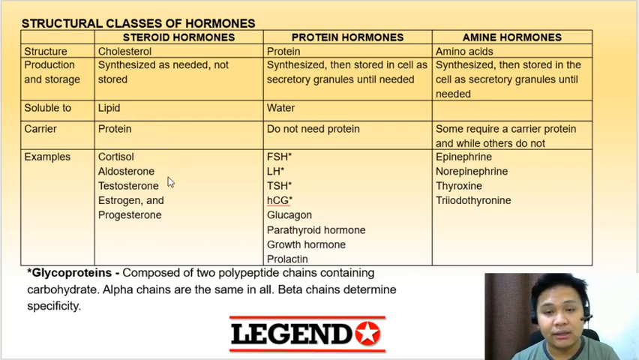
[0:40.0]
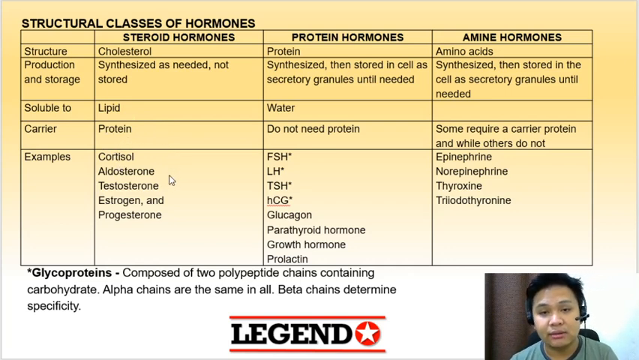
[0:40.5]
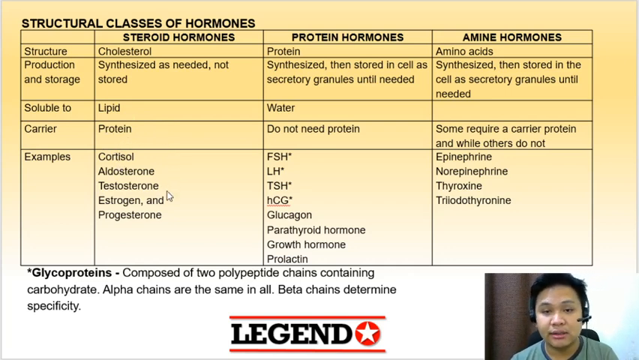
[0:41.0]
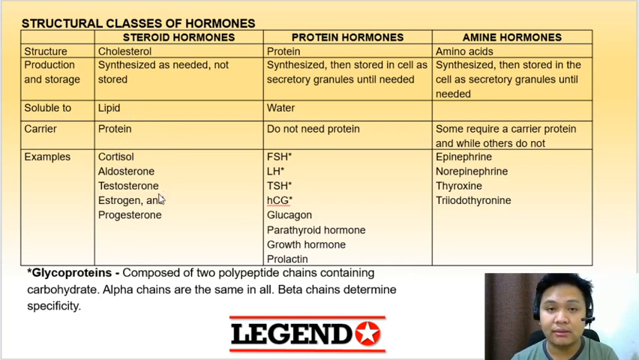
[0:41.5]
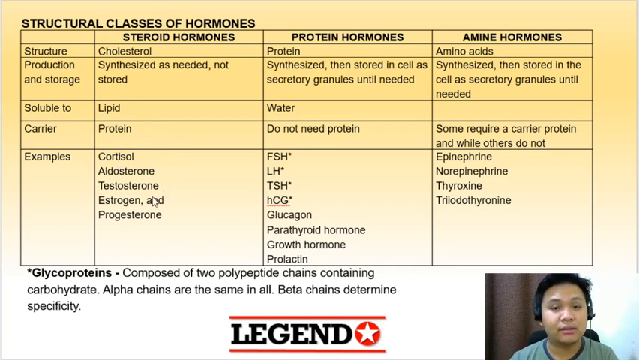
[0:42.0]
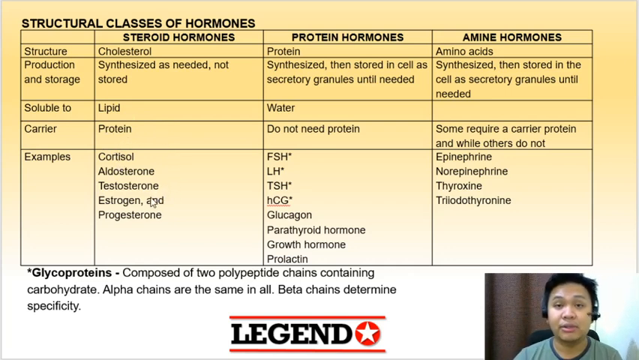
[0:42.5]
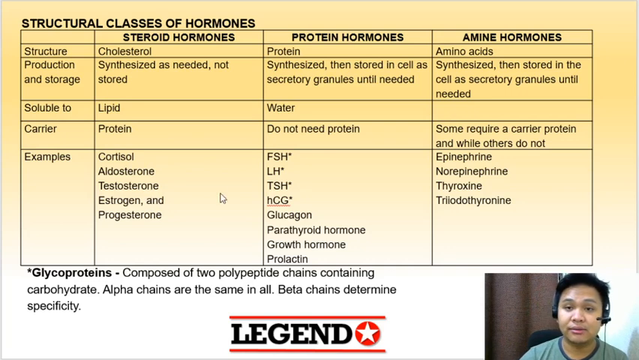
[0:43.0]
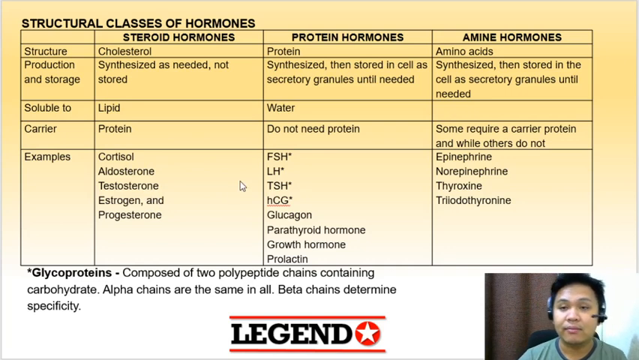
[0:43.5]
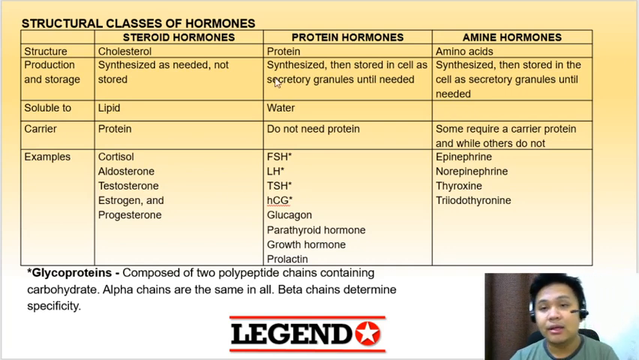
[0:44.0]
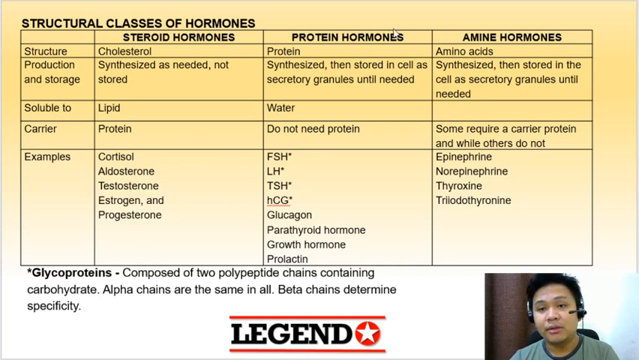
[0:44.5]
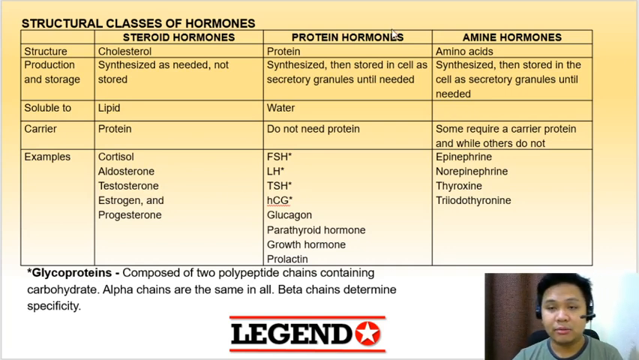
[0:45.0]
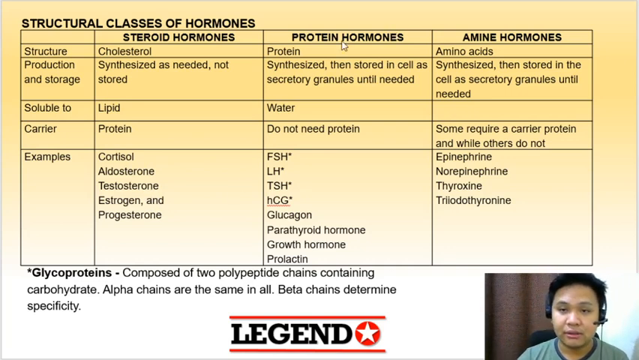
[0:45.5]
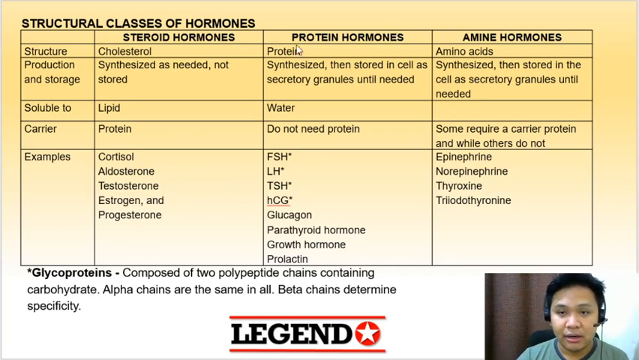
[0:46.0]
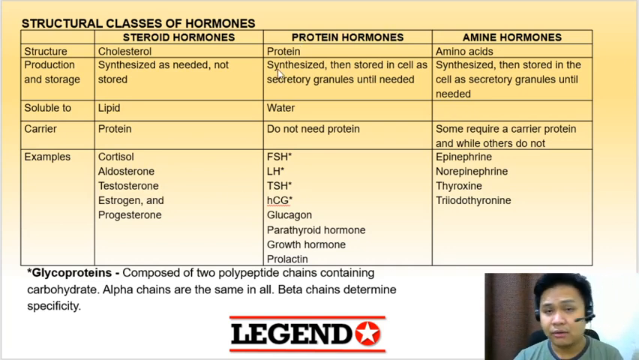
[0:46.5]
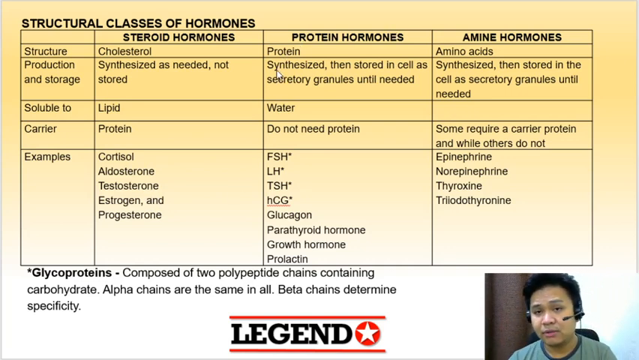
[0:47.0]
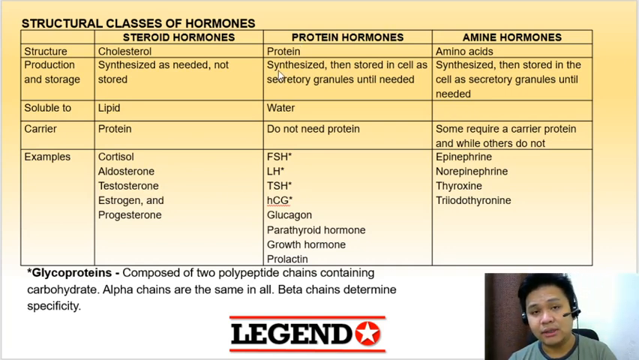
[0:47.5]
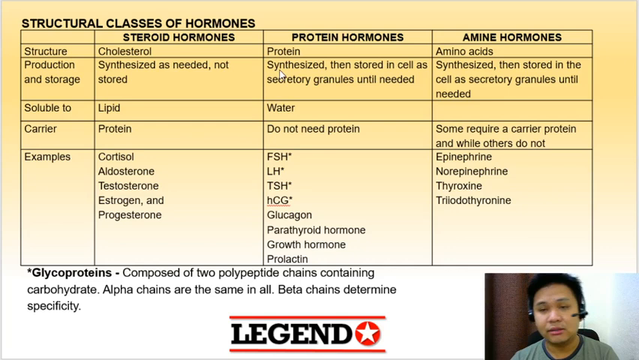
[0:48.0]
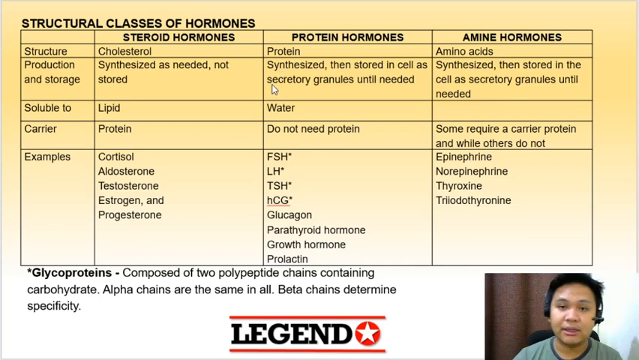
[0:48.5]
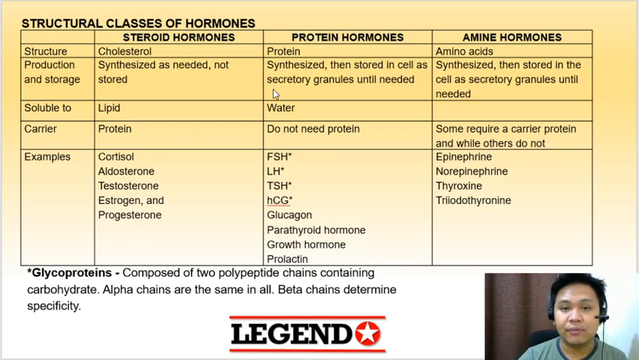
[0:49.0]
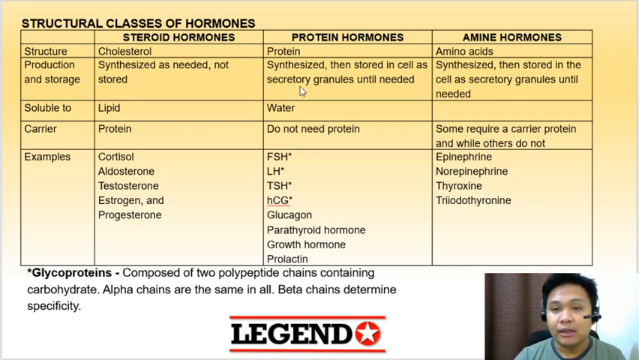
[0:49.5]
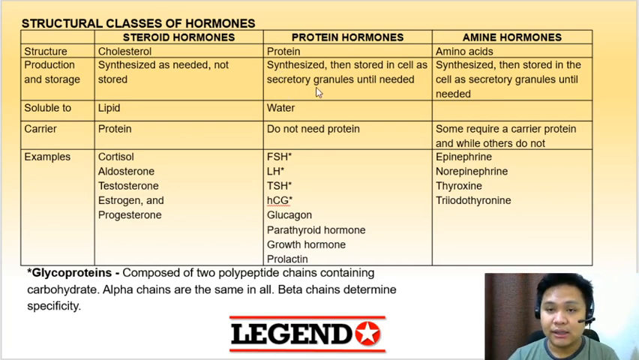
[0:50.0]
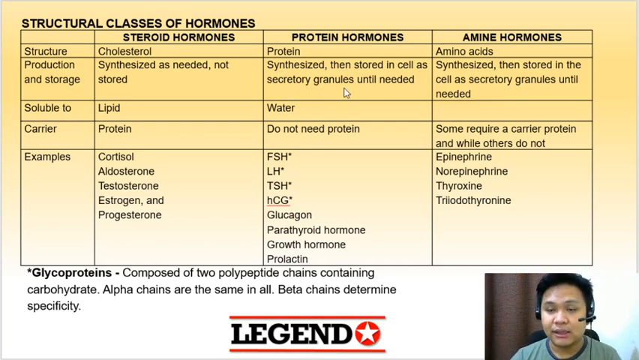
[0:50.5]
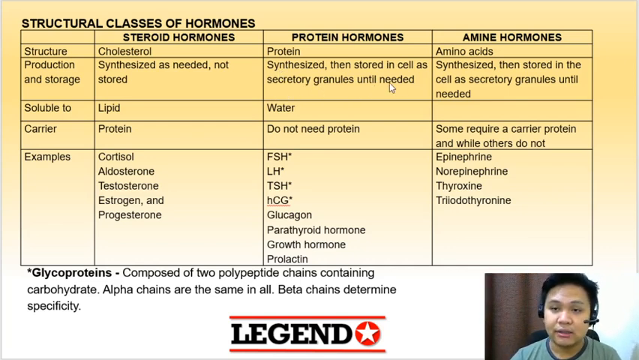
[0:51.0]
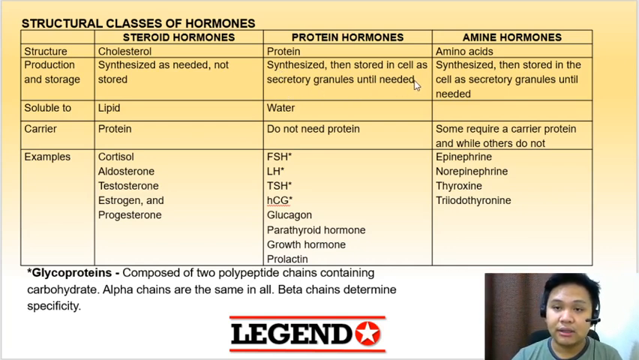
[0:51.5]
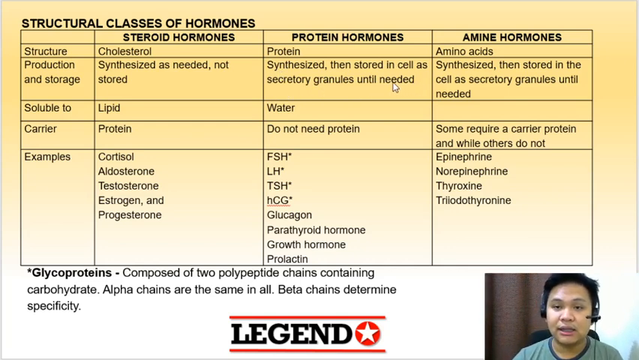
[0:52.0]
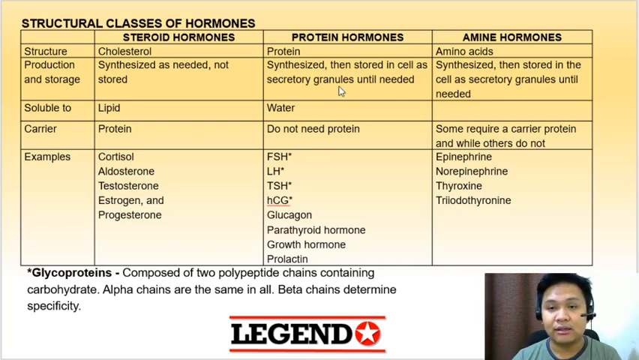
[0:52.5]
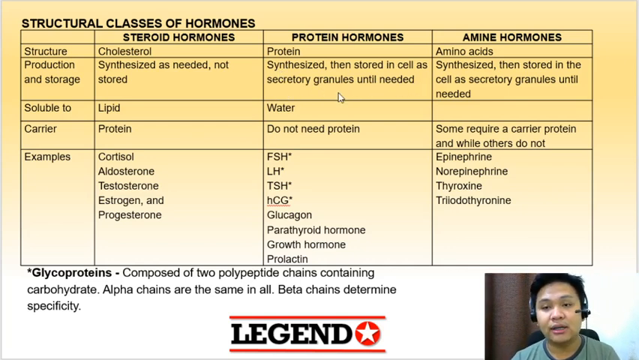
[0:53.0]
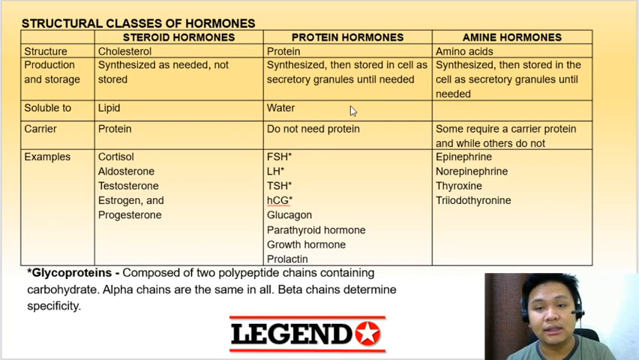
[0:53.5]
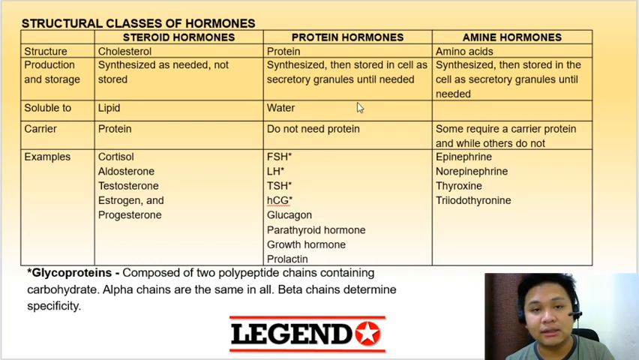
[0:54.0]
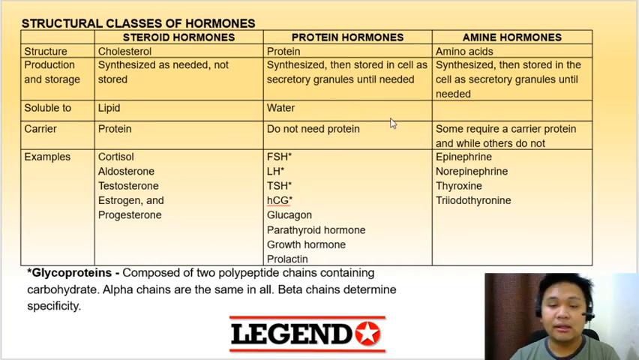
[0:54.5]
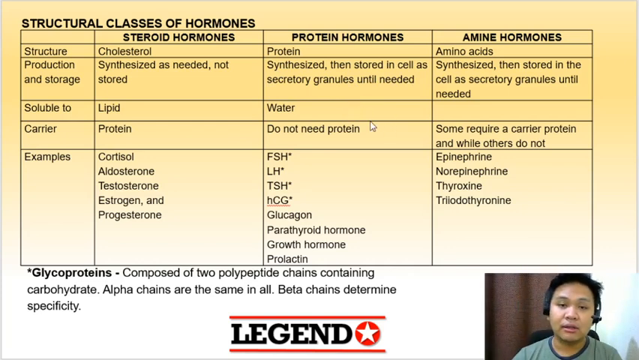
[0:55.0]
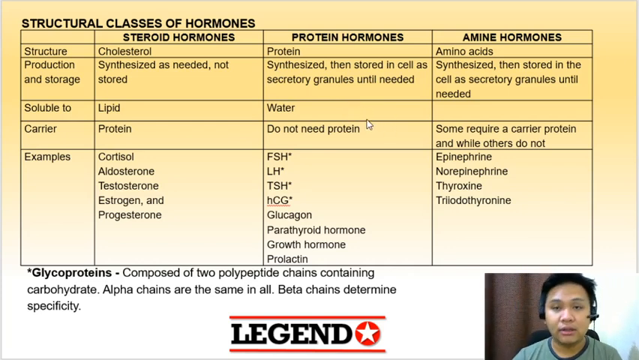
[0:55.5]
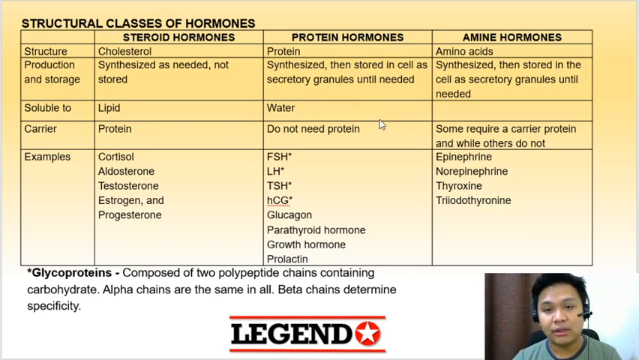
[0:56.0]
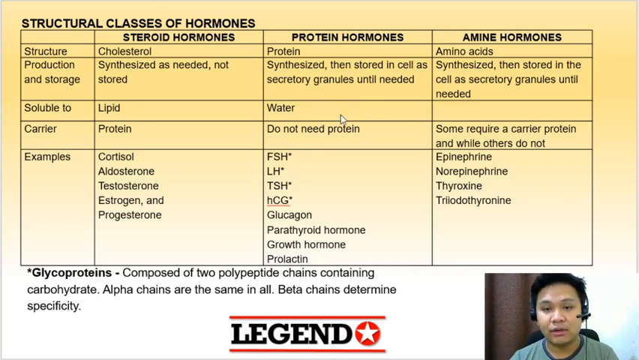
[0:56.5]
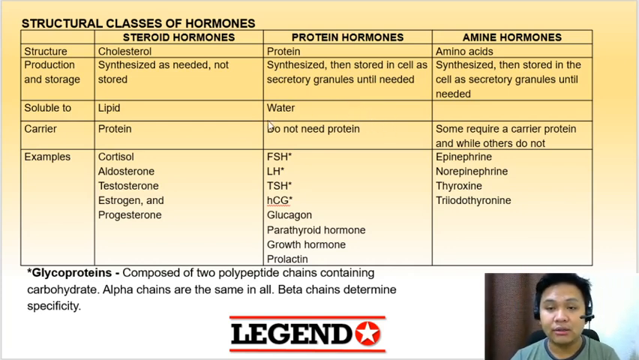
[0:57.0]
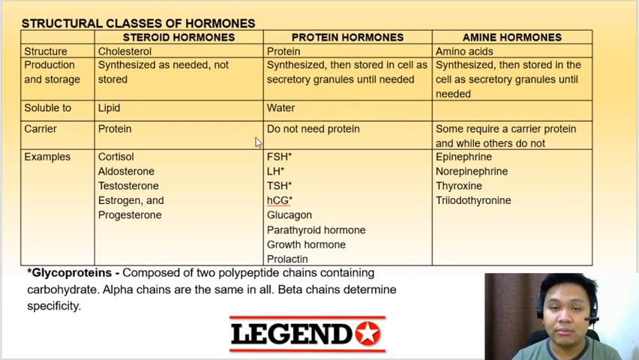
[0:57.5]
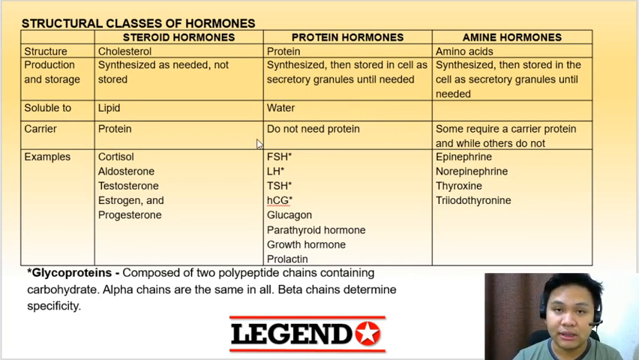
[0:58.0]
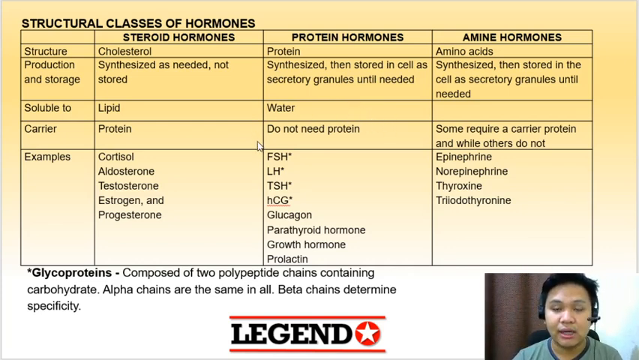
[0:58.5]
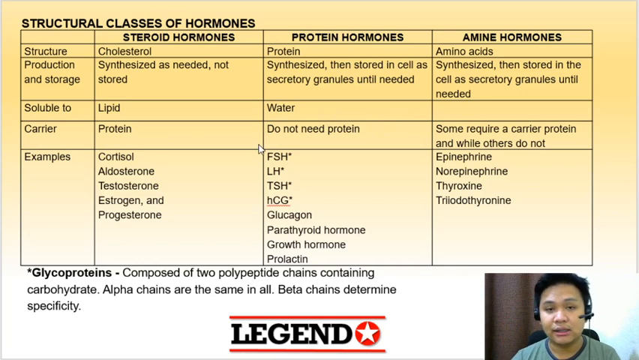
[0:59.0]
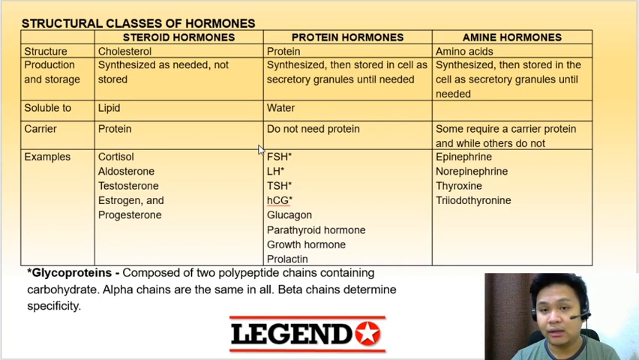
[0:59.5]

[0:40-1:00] The table on the structural classes of hormones shows steroid hormones, protein hormones and amine hormones, with information about production and storage, what the hormones are soluble to, their carrier, and examples of each. Underneath the table is the word "glycoproteins" with the note that they are composed of two polypeptide chains containing carbohydrate, that alpha chains are the same in all, and that beta chains determine specificity. A man in the bottom right corner seems to be talking about the table, perhaps explaining its contents. The table lists cholesterol for steroid hormones, protein for protein hormones and amino acids for amine hormones. Cholesterol is synthesized as needed; protein is synthesized, then stored in cells as secretory granules until needed; amino acids are synthesized, then stored in the cell as secretory granules until needed. Examples of steroid hormones are cortisol and estrogen, and examples of protein hormones are FSH, LH, TSH and hCG.